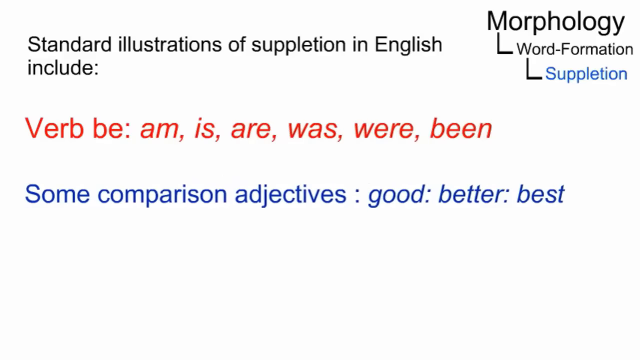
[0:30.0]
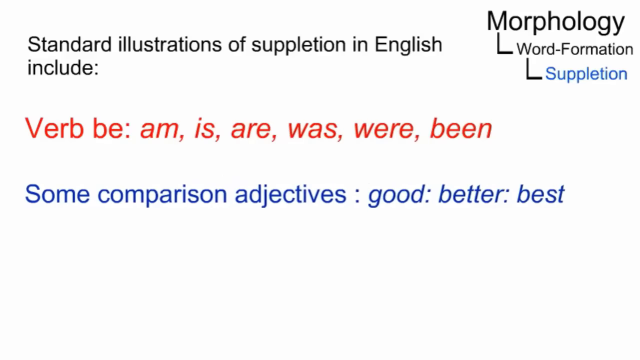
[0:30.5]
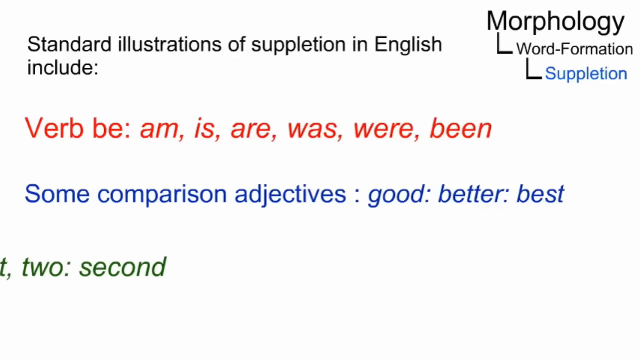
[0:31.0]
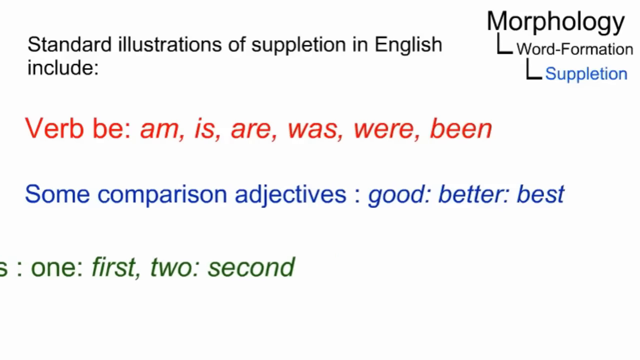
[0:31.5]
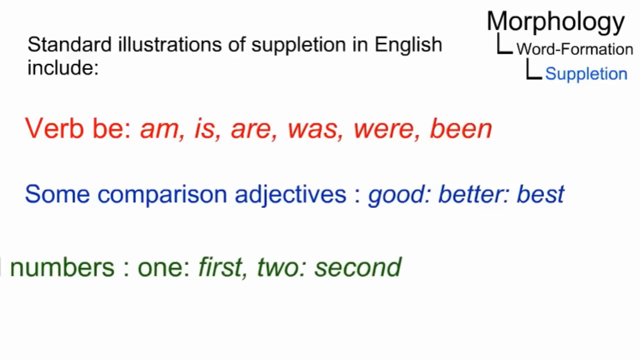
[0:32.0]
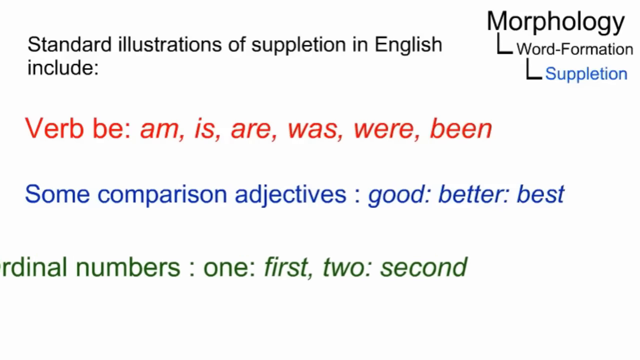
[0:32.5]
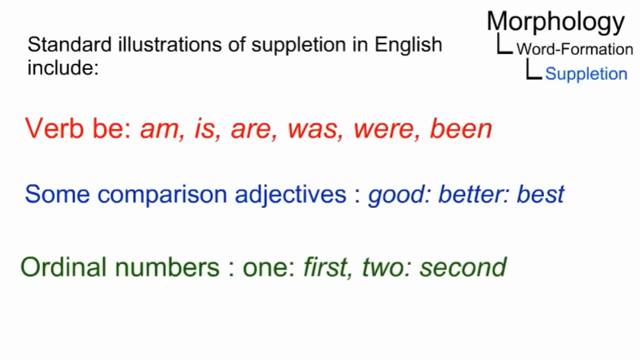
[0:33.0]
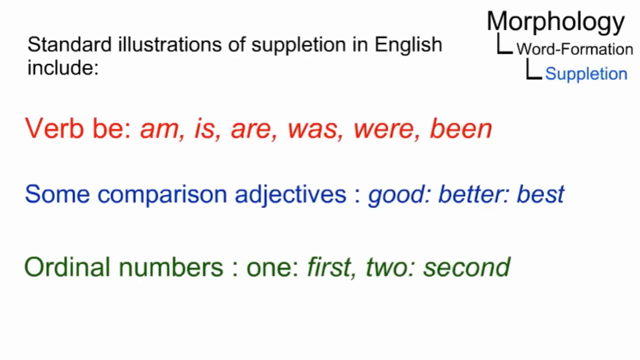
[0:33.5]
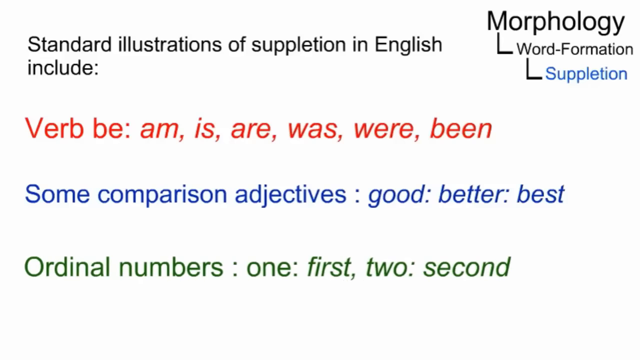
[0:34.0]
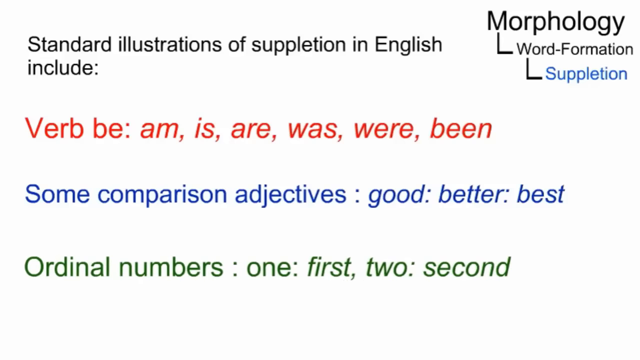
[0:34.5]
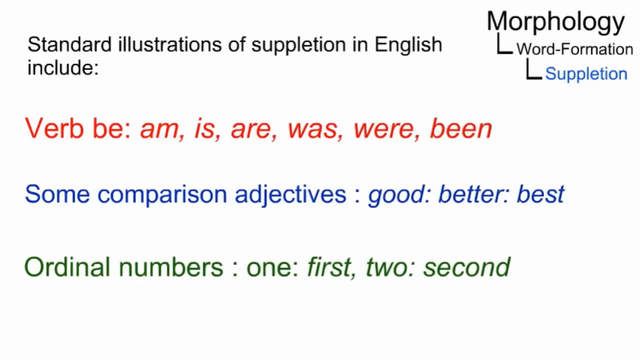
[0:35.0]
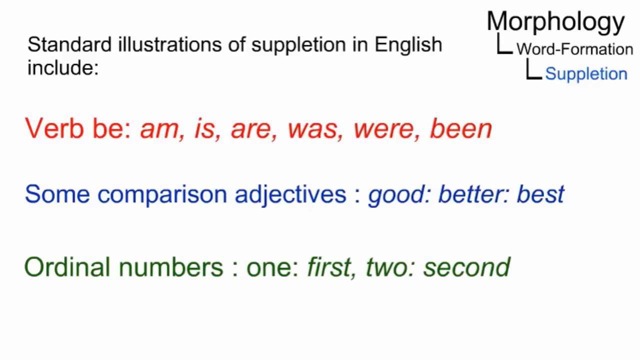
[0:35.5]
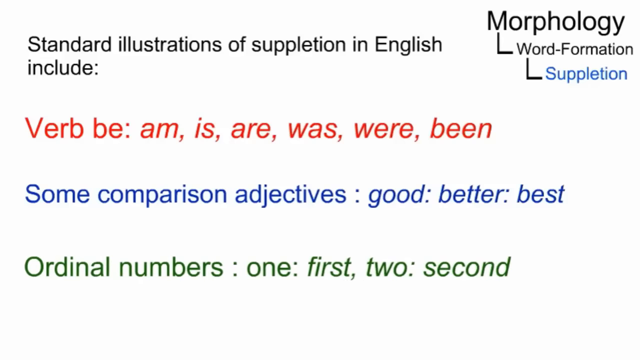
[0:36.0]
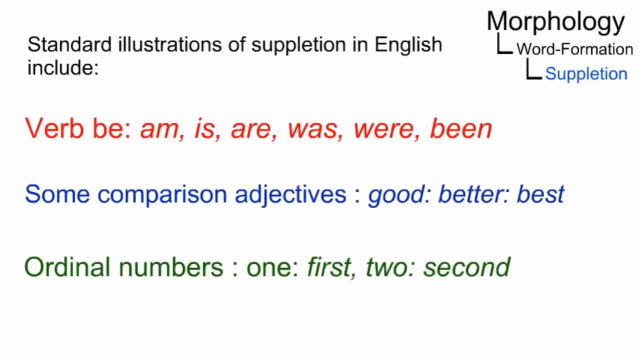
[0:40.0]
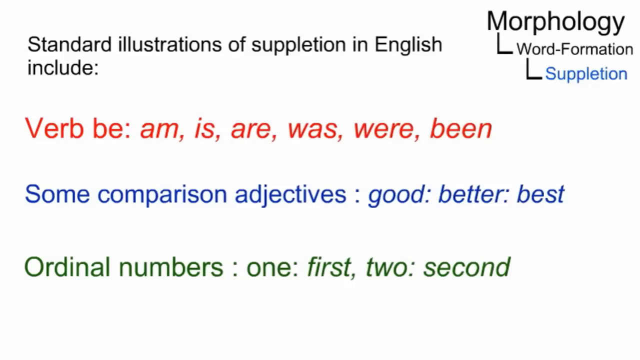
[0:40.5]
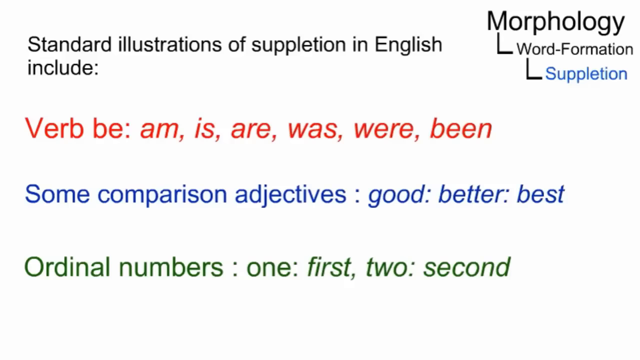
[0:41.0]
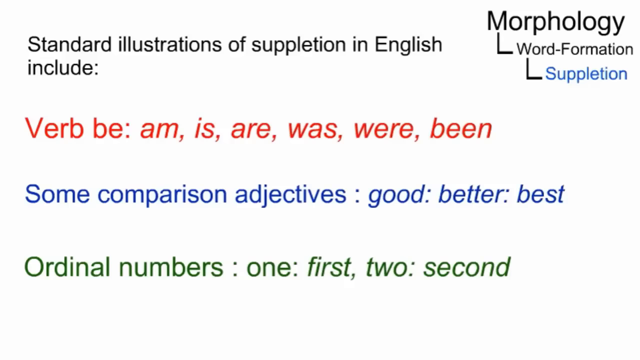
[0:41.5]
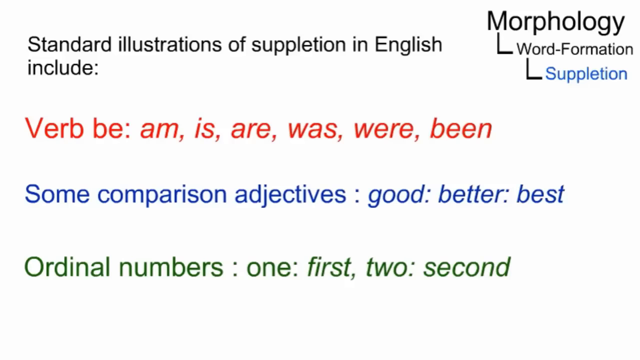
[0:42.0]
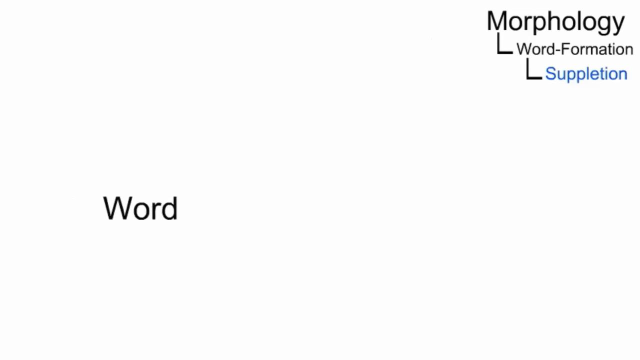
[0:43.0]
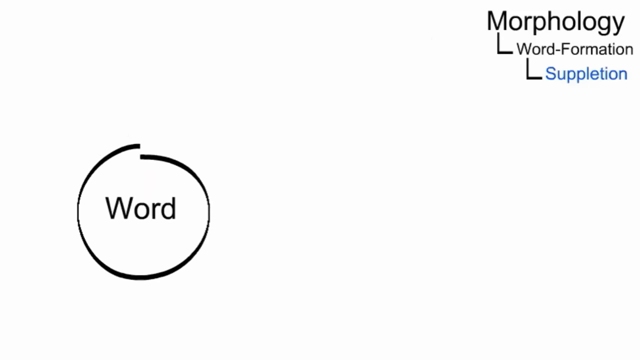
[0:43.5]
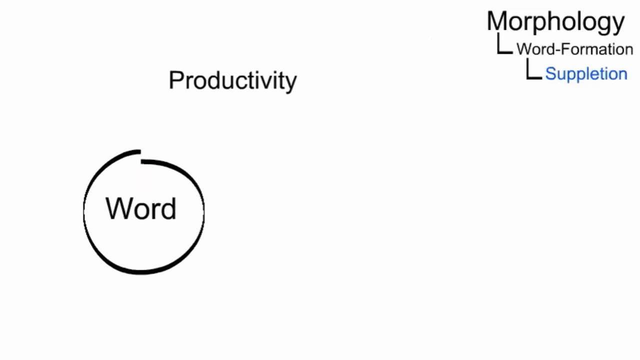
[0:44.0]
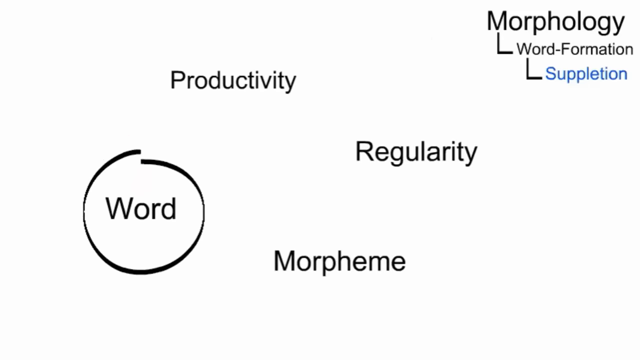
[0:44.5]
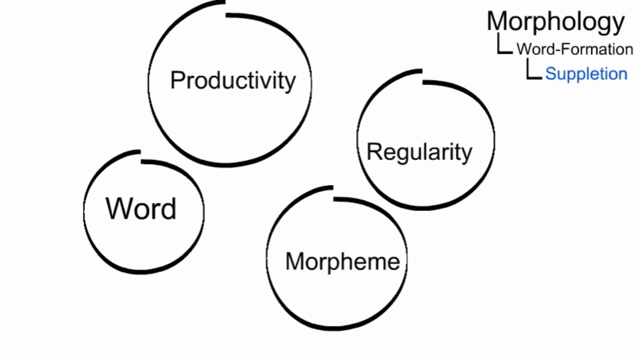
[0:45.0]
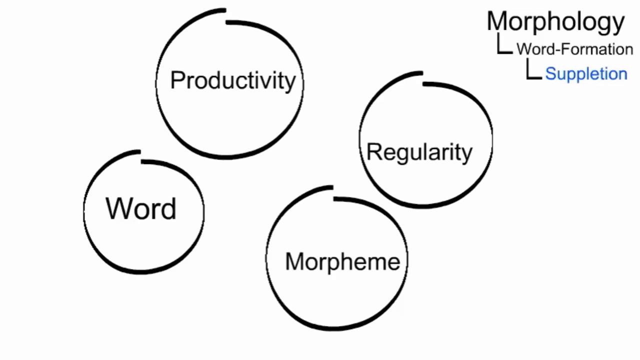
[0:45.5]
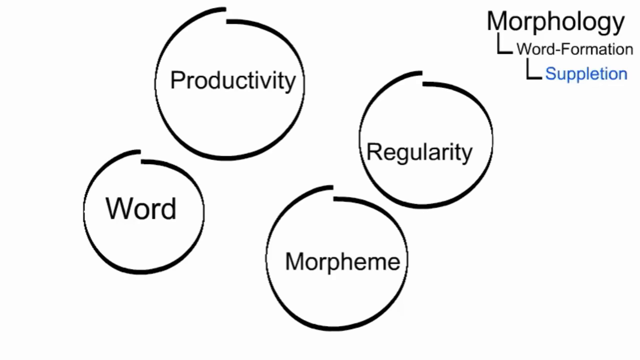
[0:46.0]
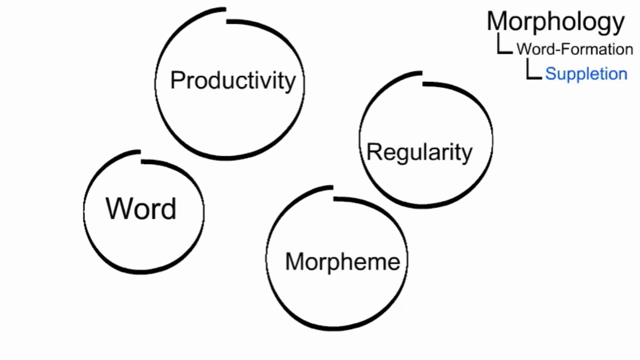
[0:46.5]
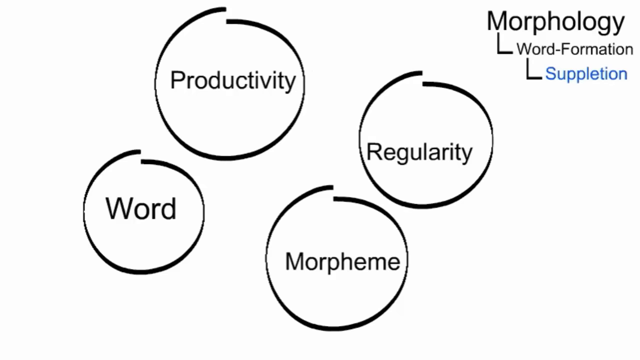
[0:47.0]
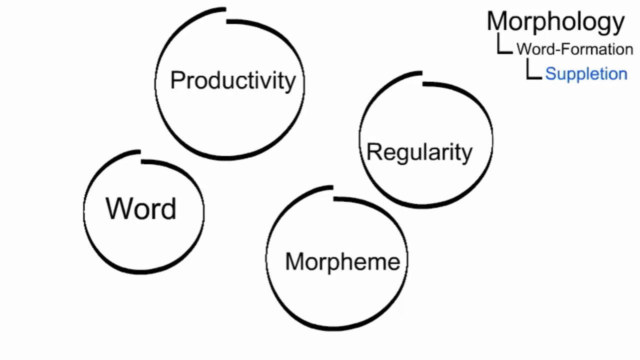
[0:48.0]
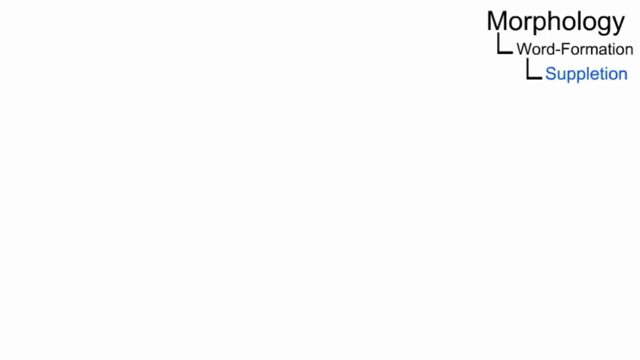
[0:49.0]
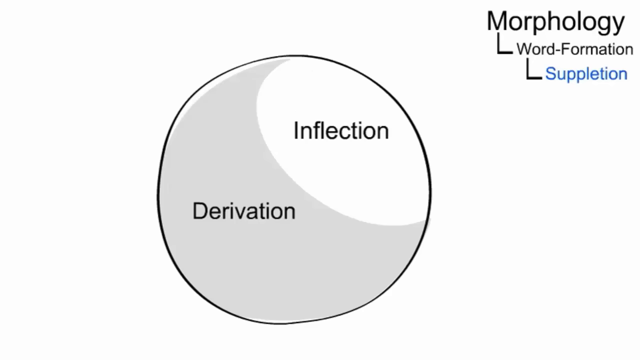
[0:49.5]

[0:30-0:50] Notes are written on the whiteboard: the verbs "be, am, is, were, were, been," some comparison adjectives, and ordinal numbers "one first, two second." An oval made of black and white also contains words: "derivation" is written on the black area and "inflection" on the white one. At the top of the board is "morphology L word formation L suppletion," and under the notes is "standard illustration of suppletion in English." The words on the board are in black, blue, red and green: the verbs are red, the comparison adjectives blue, the ordinal numbers green, and the other words black.